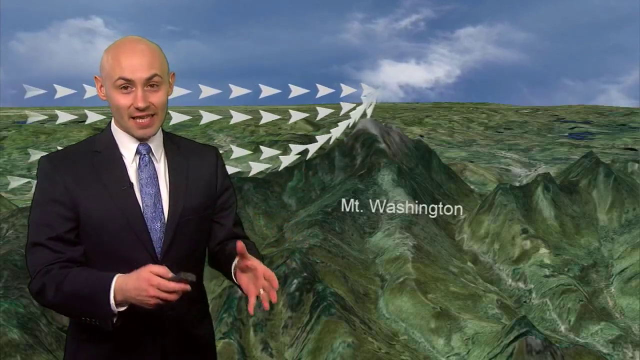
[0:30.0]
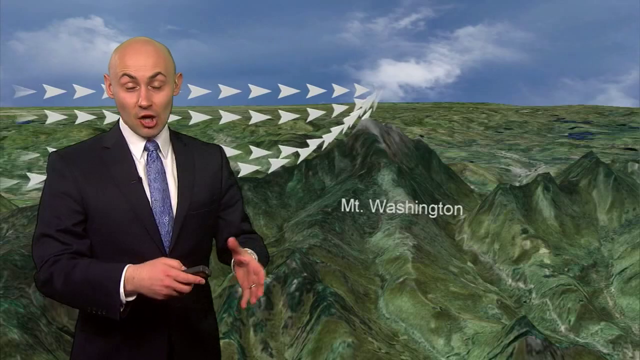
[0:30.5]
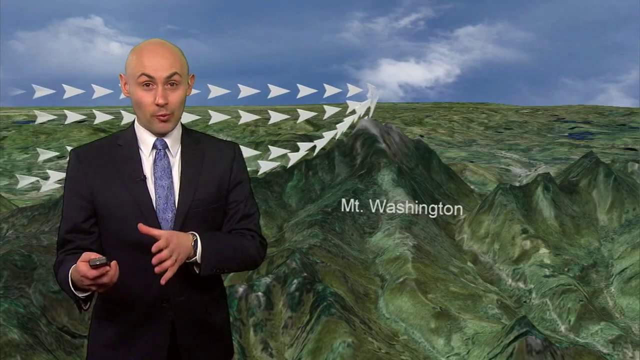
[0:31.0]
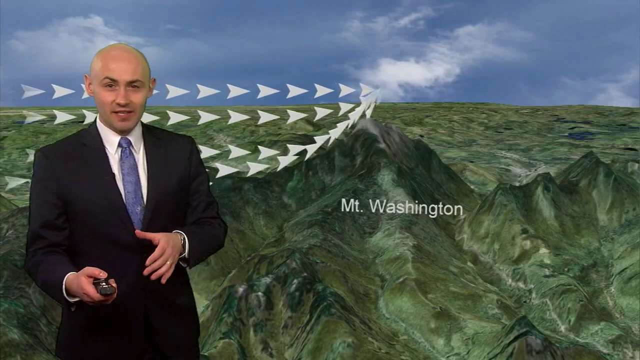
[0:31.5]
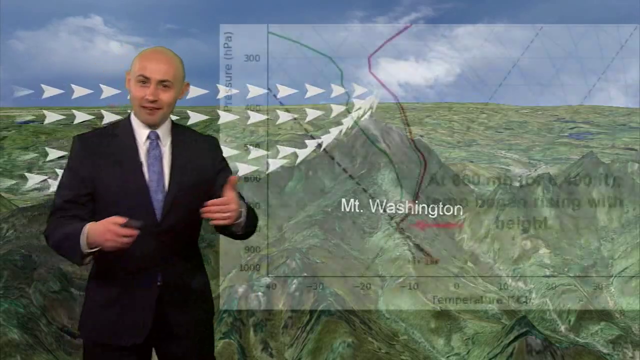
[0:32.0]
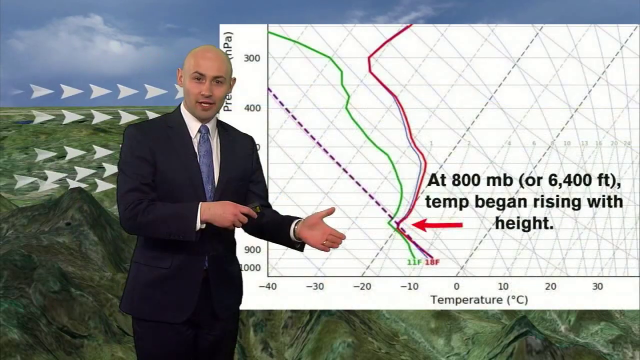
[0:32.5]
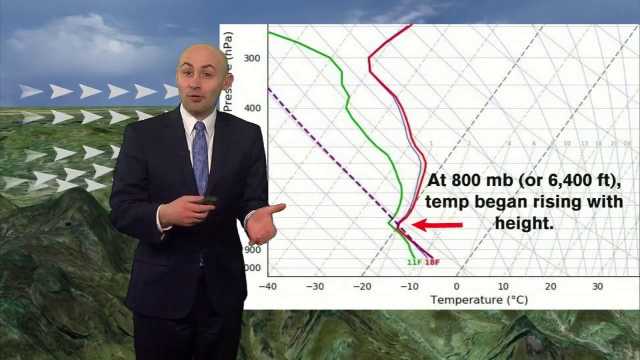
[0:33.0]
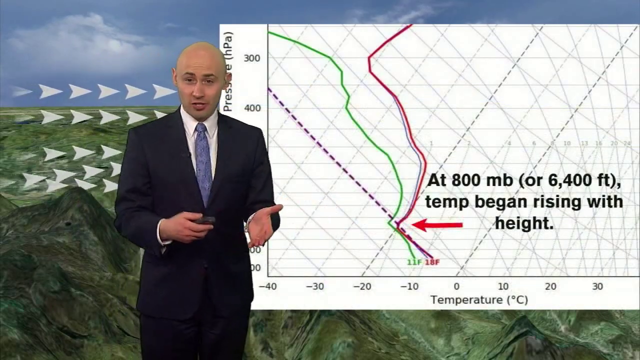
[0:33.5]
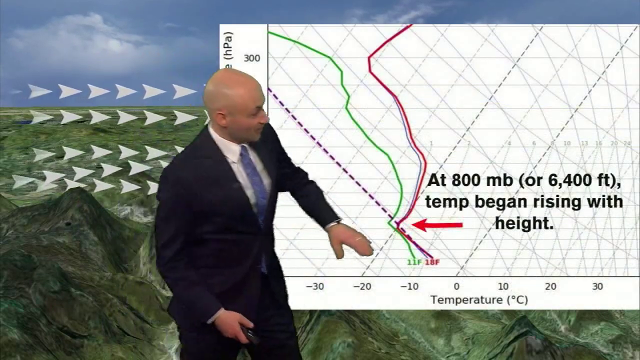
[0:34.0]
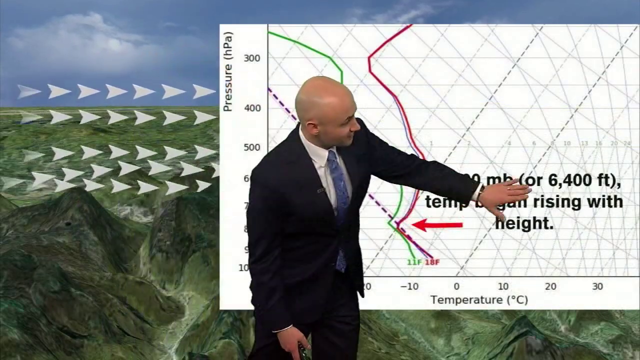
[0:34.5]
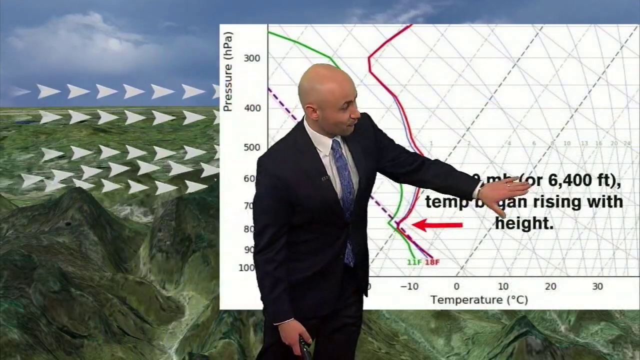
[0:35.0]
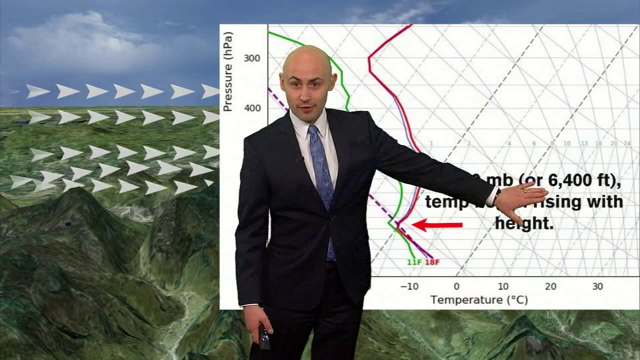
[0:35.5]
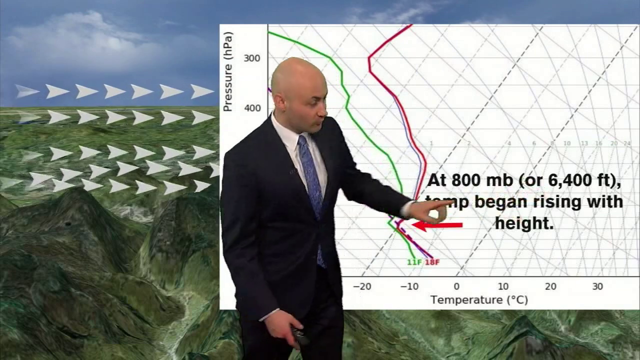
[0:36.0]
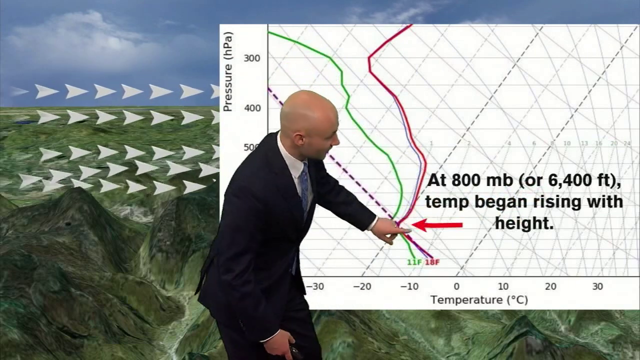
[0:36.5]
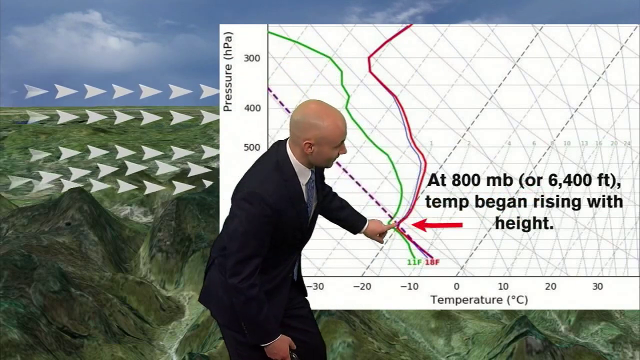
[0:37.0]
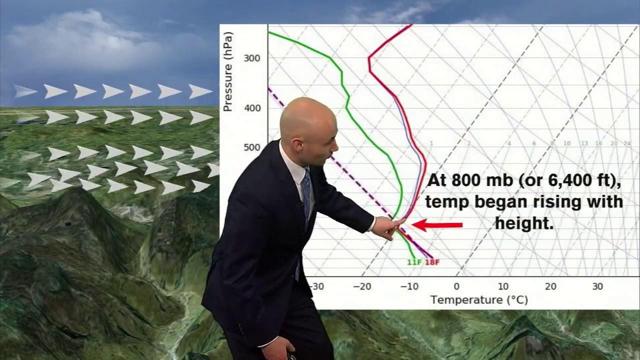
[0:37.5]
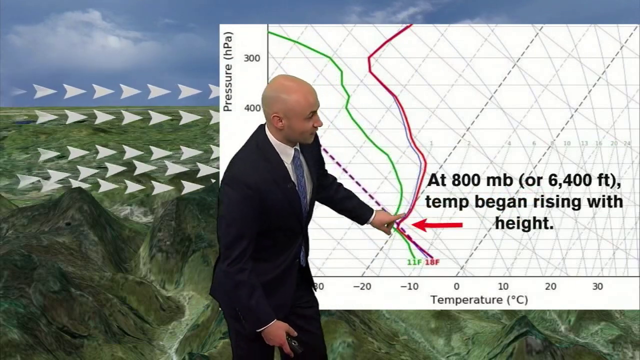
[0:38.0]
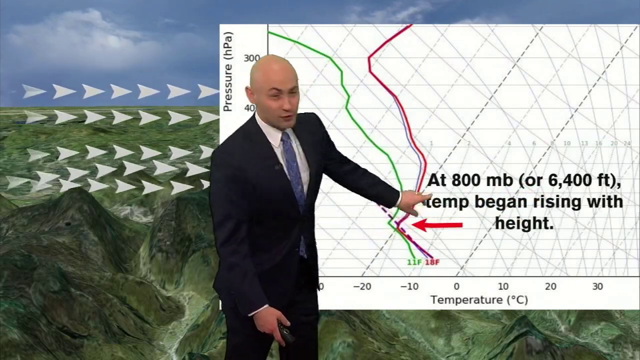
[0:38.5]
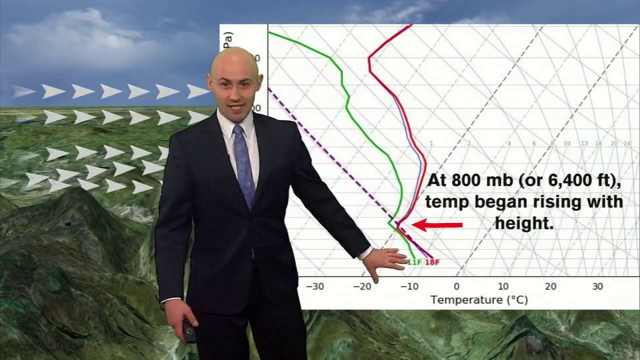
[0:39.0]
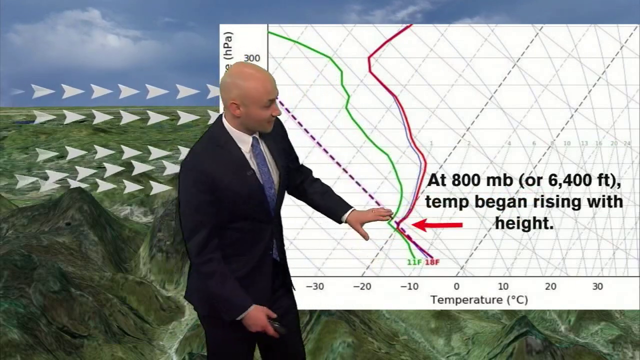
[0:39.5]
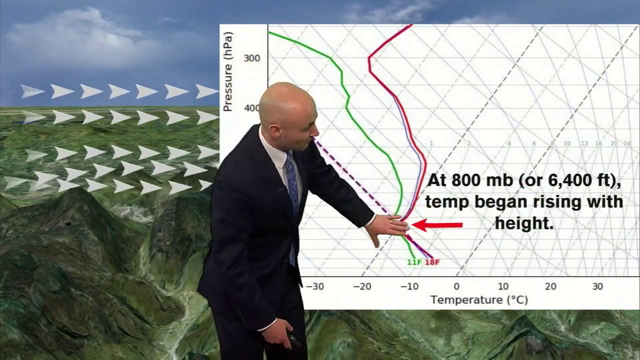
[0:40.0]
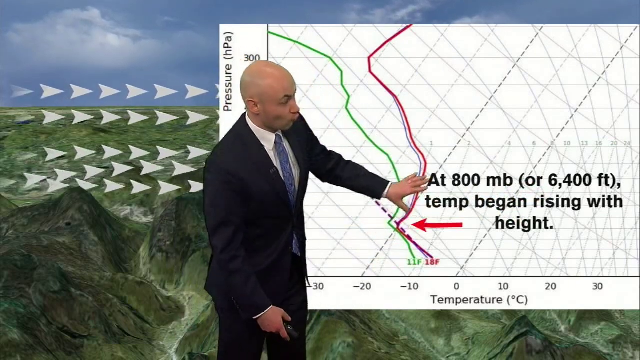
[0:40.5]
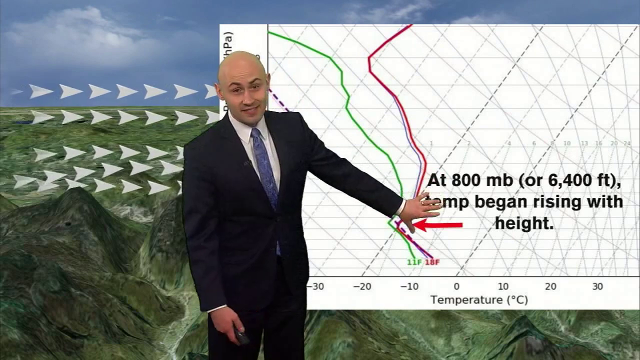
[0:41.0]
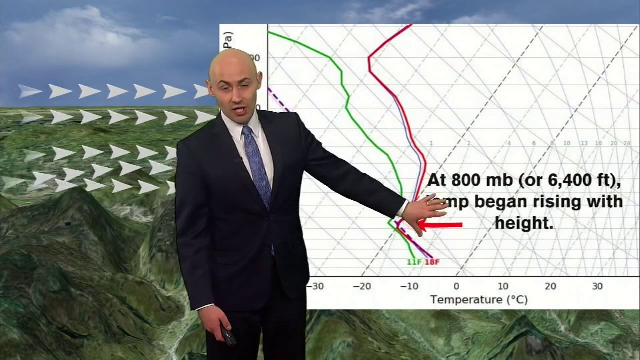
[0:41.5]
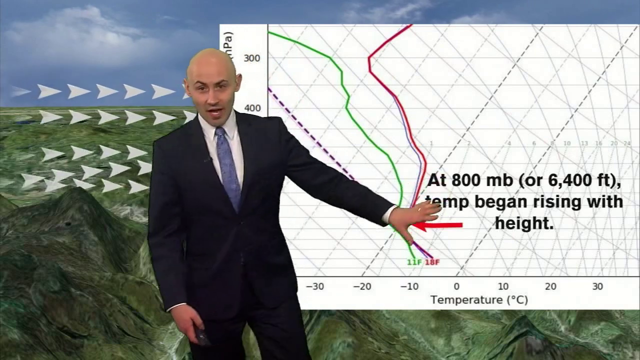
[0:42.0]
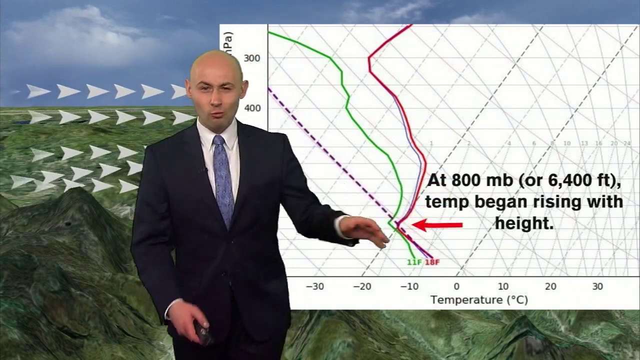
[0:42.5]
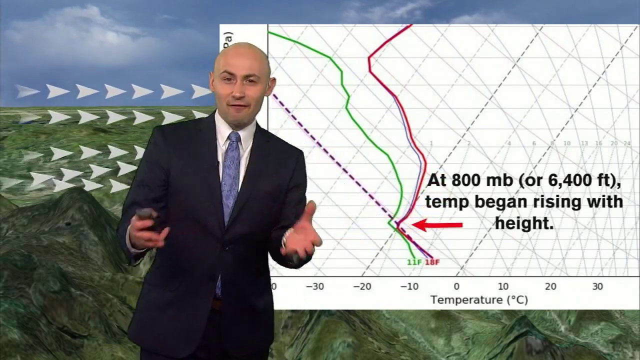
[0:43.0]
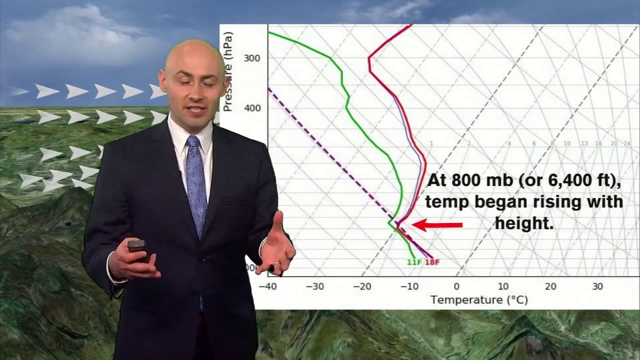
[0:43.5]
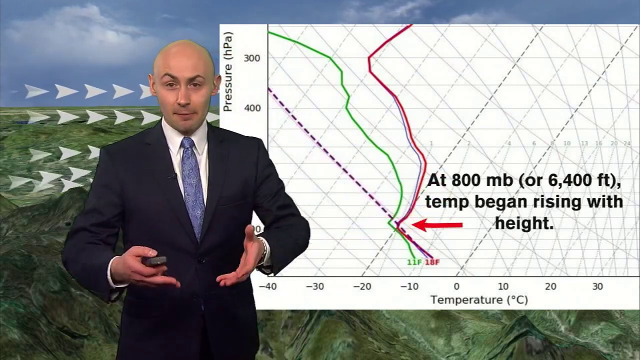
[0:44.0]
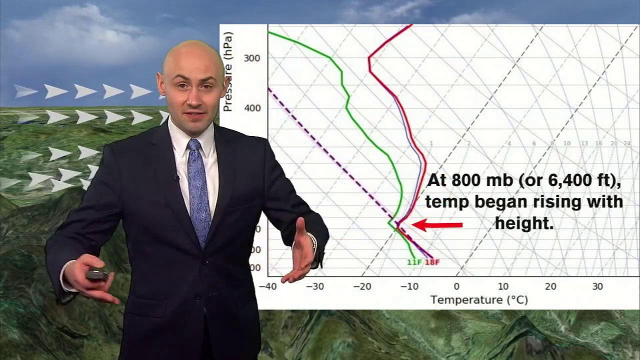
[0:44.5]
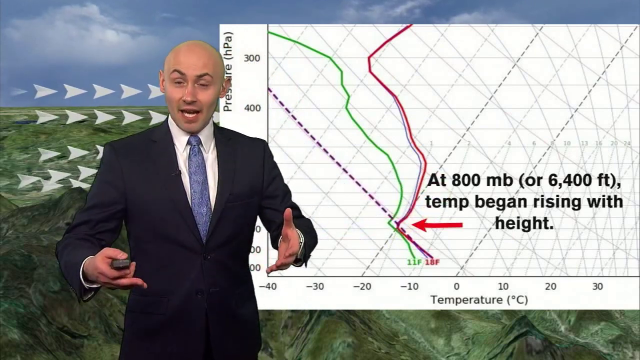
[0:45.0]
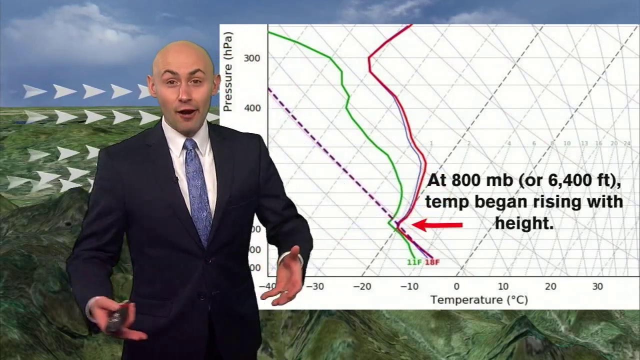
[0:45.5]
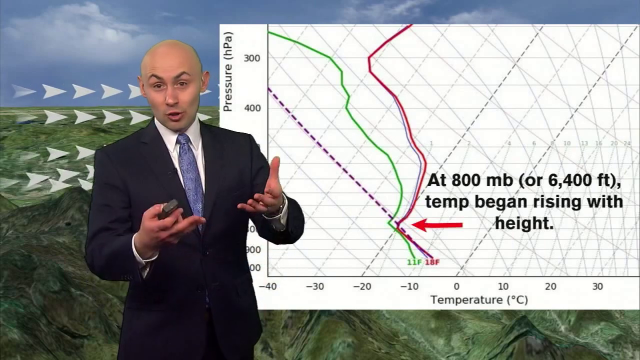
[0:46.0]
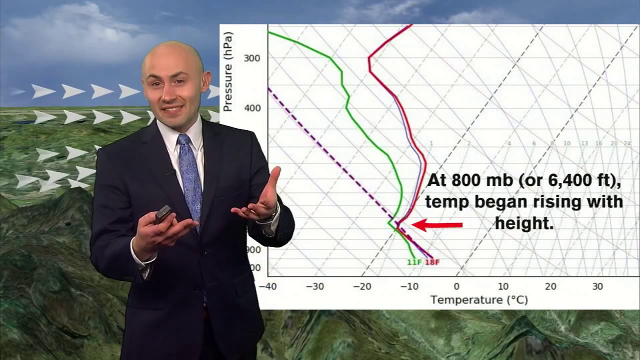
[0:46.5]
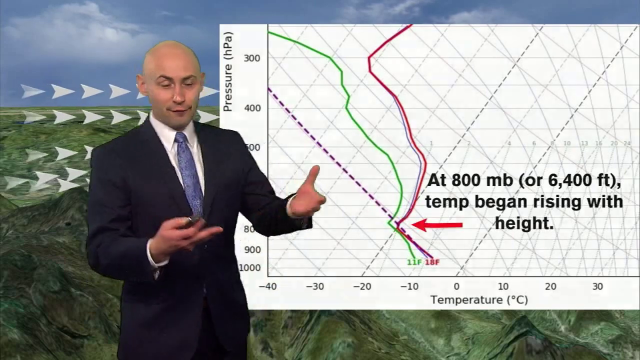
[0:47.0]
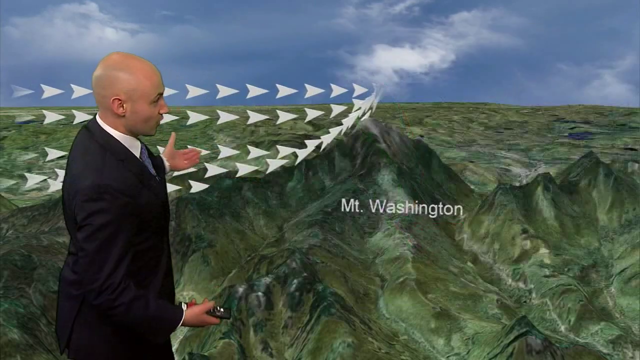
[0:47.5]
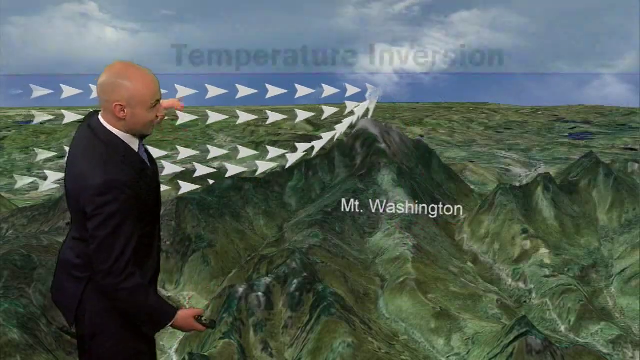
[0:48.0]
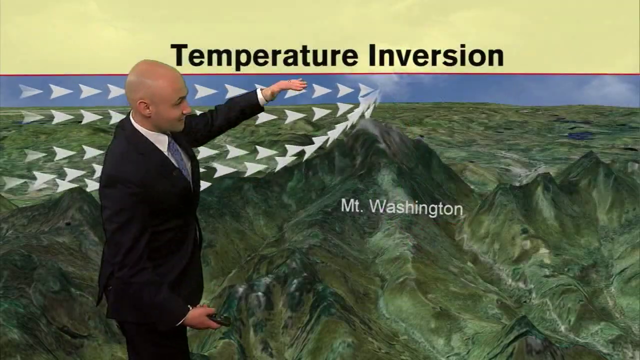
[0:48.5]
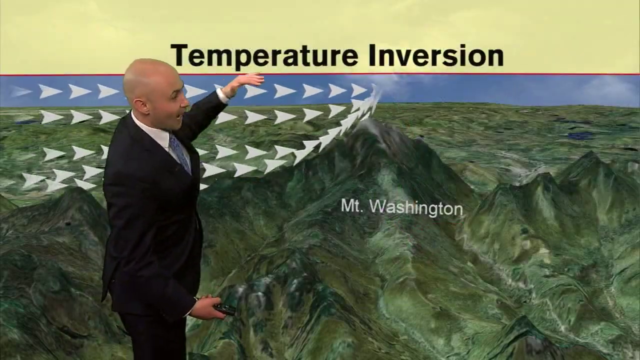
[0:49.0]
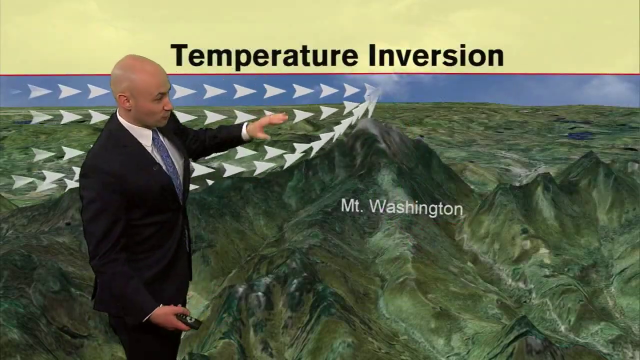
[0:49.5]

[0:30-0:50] A bald weather reporter stands in front of a 3D image of what is probably Mount Washington. Short white arrows depict the flow of current, possibly as a result of a weather event. A chart then appears on the screen behind the man, who goes towards it and points at a group of text written on it. The chart's y-axis has information on pressure and its x-axis has values for temperature. The text on the chart says "At 800 mb (or 6,400 ft), temp began rising with height." A red arrow points towards part of the chart, and the man points at the location the red arrow points to. He walks a bit forward, gesticulates with his hands, and turns around towards the 3D image of the mountain and flowing current as the chart disappears. The text "Temperature Inversion" then appears at the top of the screen.